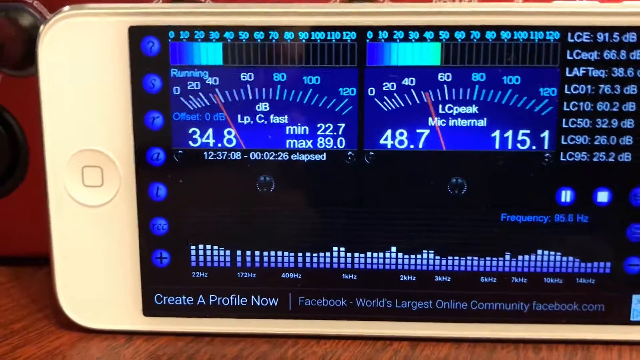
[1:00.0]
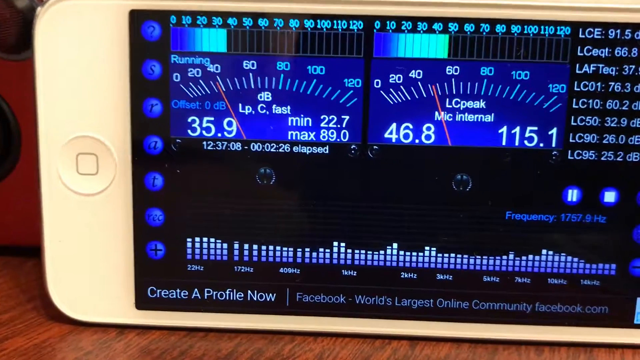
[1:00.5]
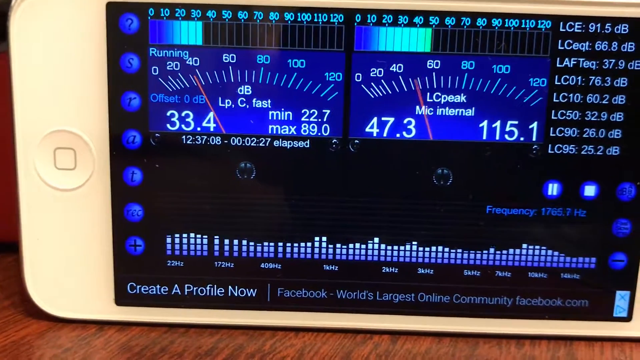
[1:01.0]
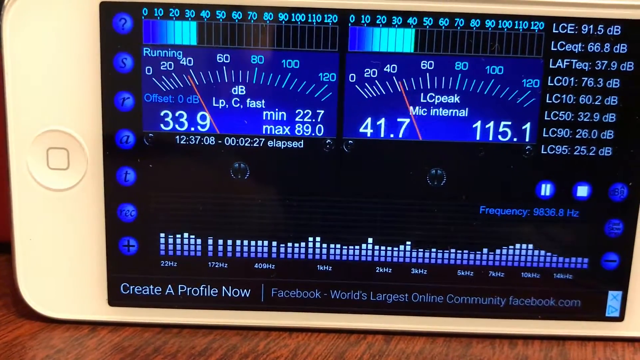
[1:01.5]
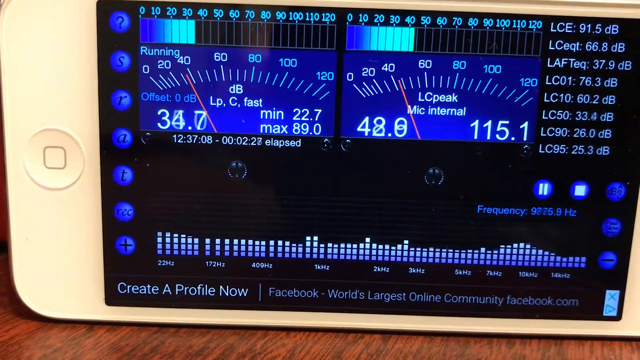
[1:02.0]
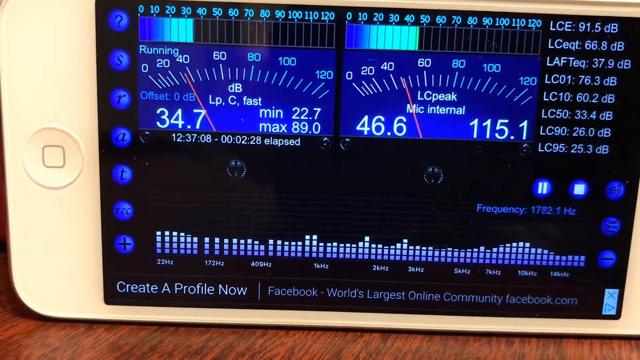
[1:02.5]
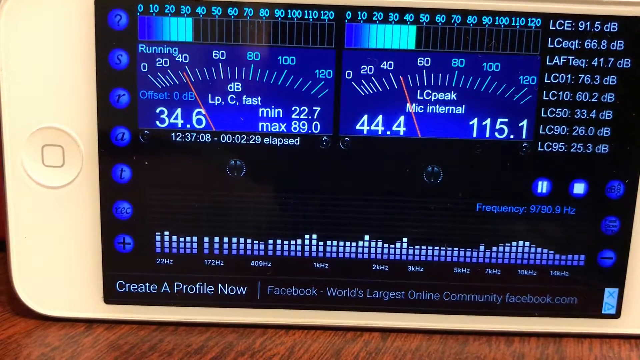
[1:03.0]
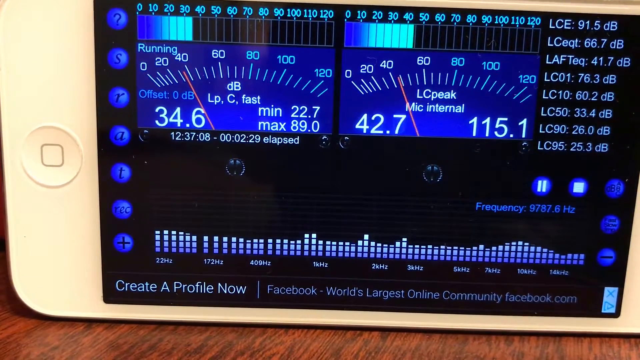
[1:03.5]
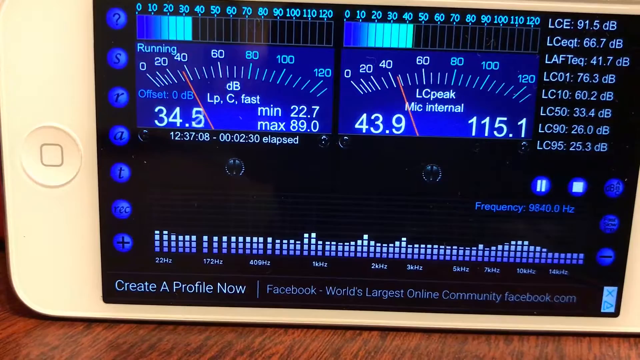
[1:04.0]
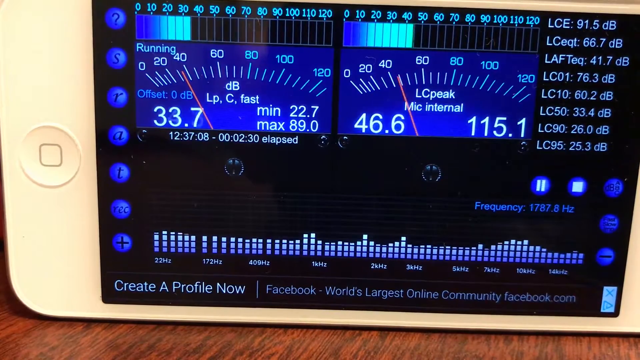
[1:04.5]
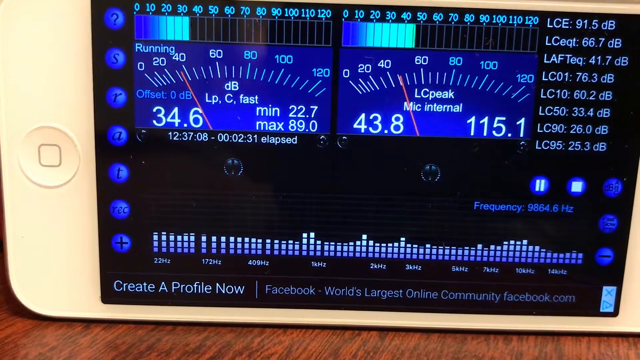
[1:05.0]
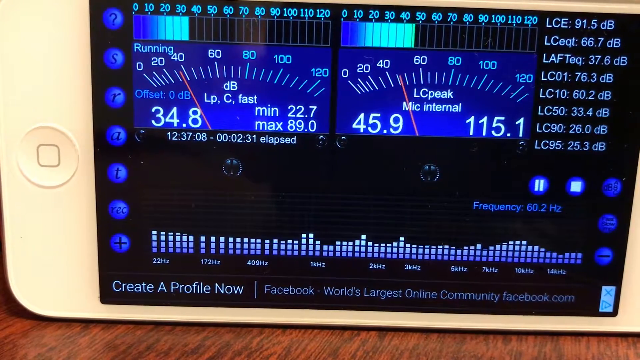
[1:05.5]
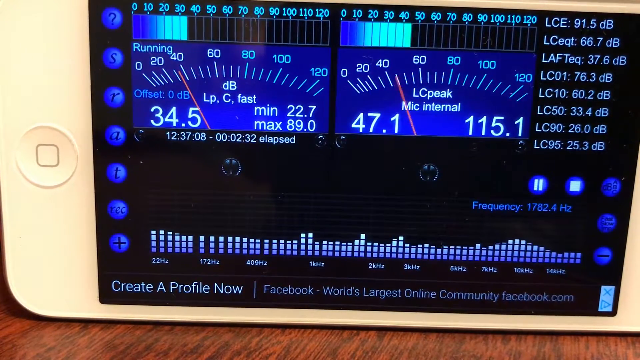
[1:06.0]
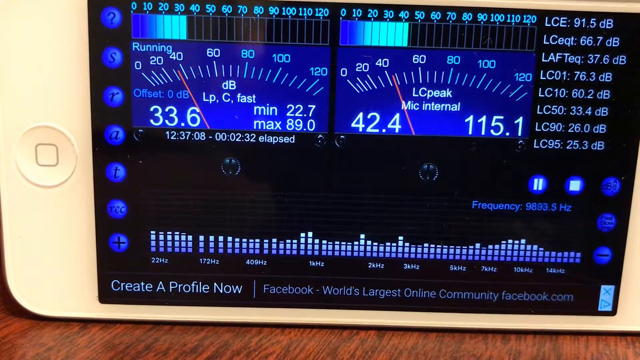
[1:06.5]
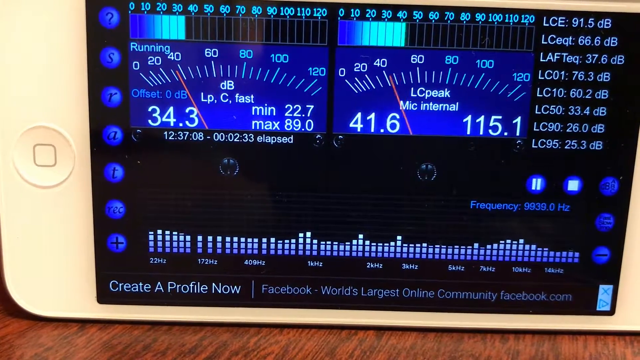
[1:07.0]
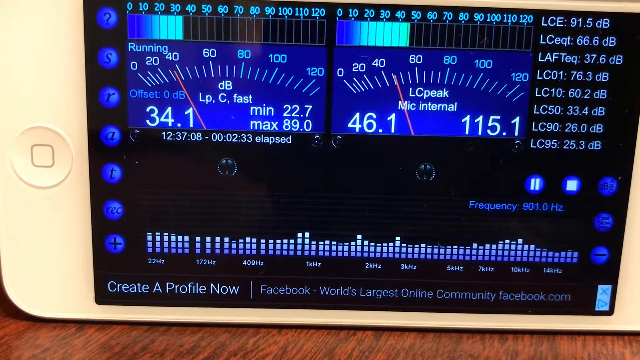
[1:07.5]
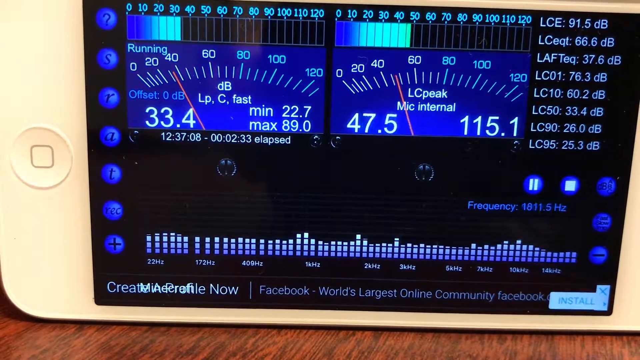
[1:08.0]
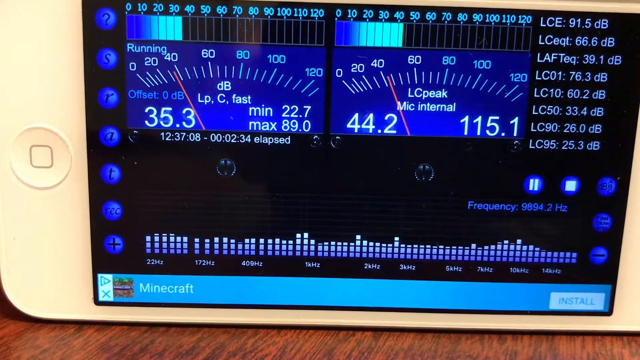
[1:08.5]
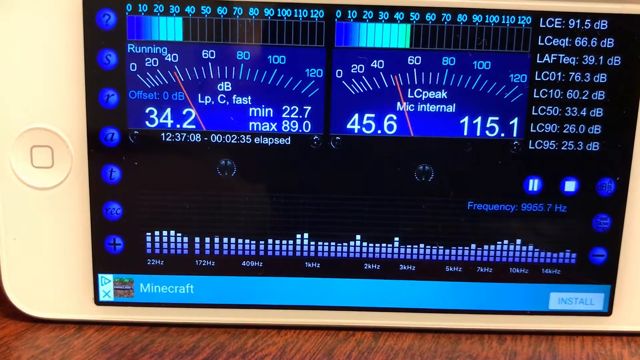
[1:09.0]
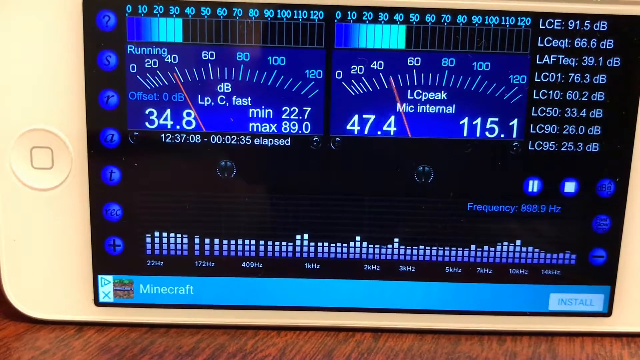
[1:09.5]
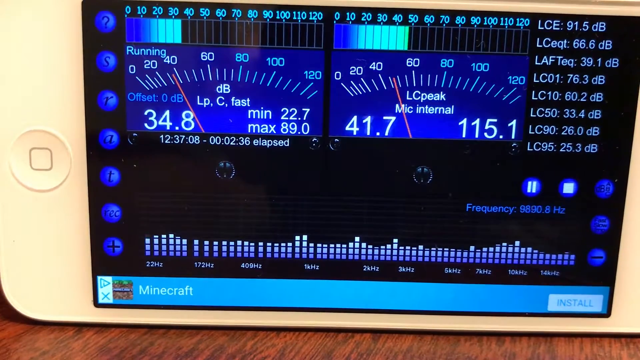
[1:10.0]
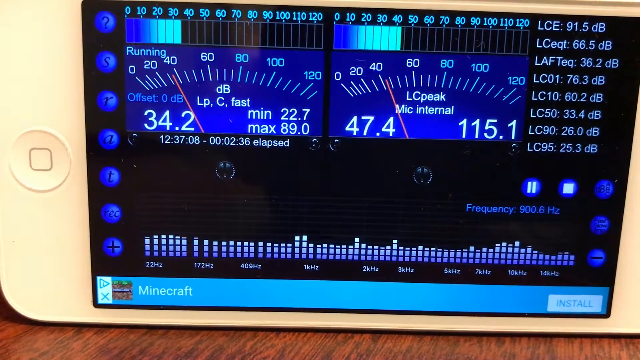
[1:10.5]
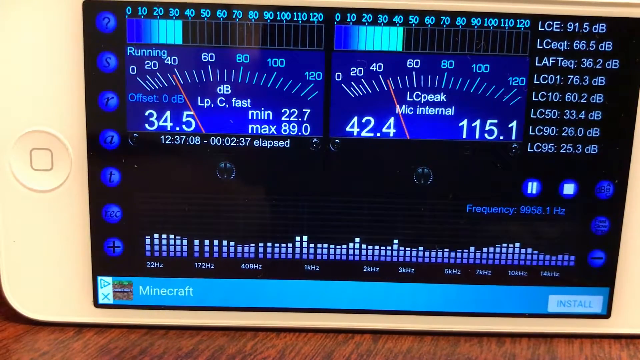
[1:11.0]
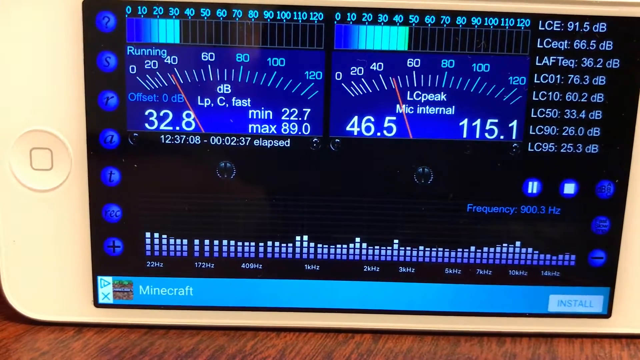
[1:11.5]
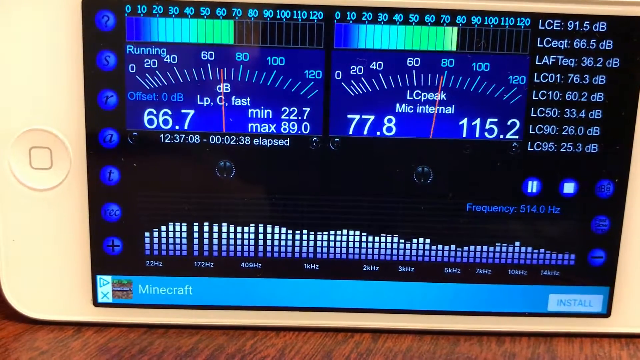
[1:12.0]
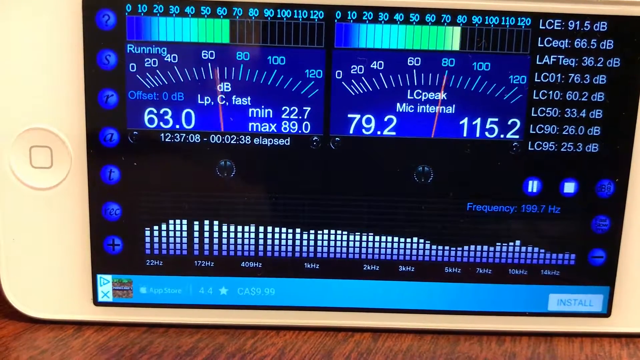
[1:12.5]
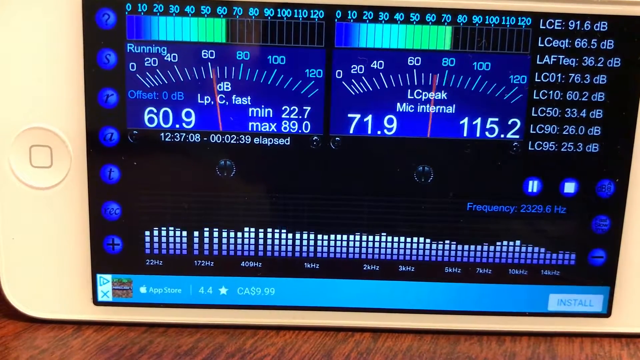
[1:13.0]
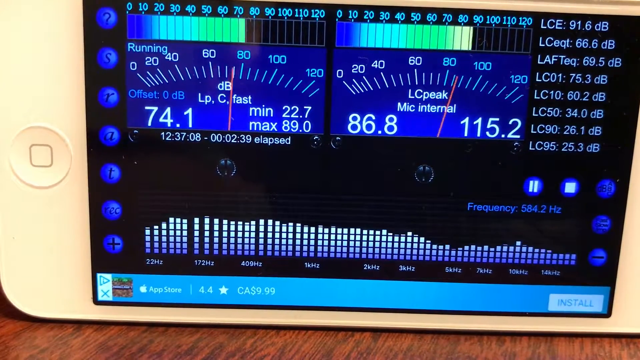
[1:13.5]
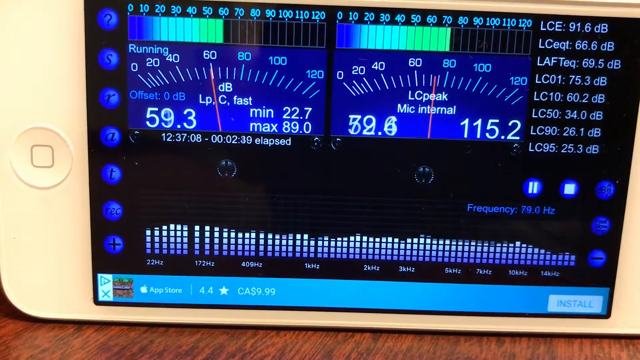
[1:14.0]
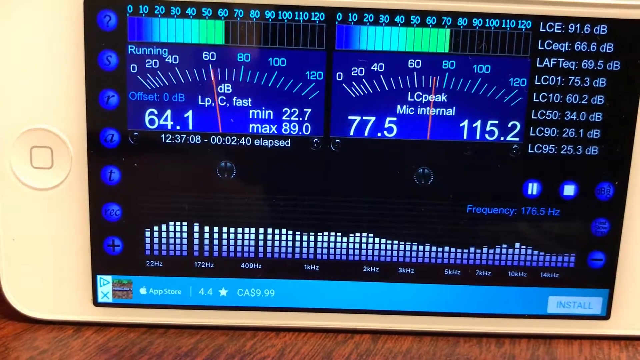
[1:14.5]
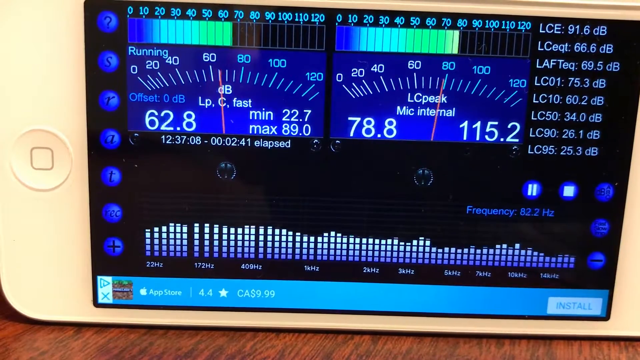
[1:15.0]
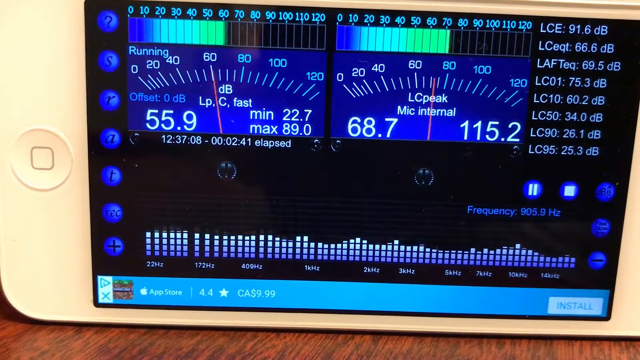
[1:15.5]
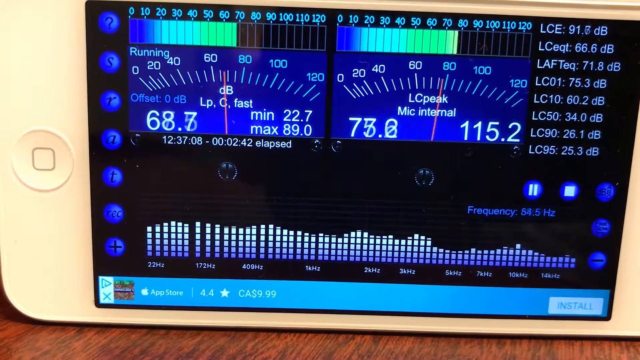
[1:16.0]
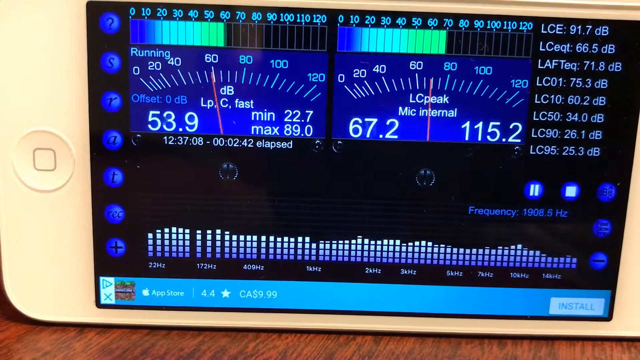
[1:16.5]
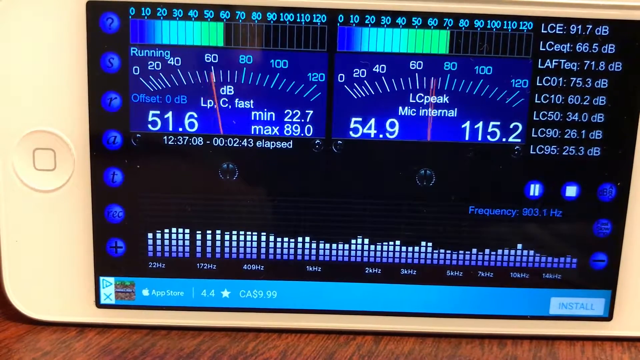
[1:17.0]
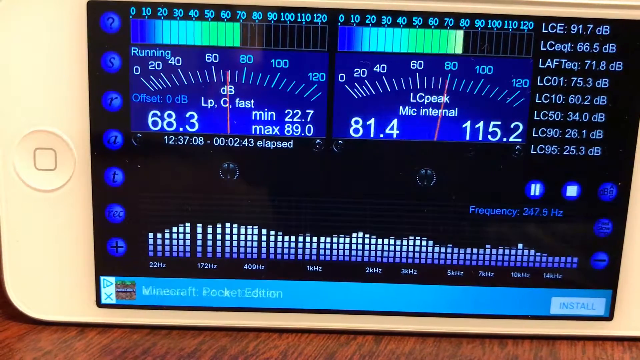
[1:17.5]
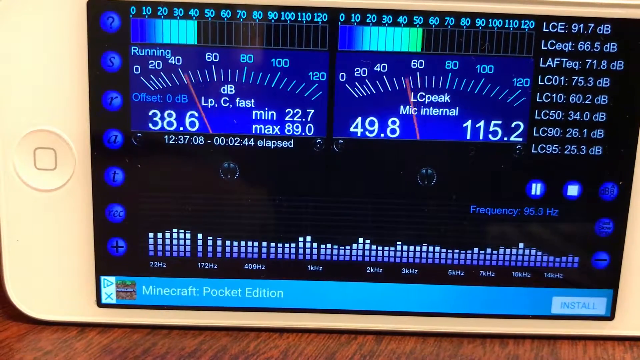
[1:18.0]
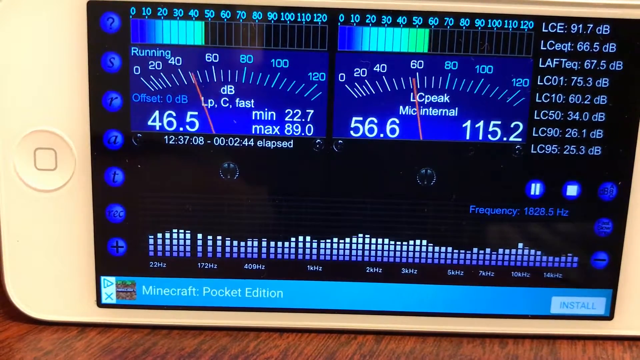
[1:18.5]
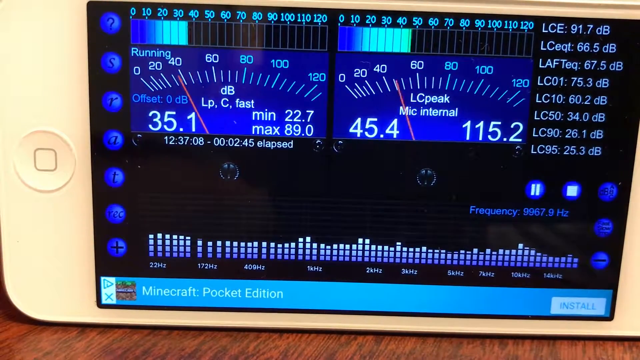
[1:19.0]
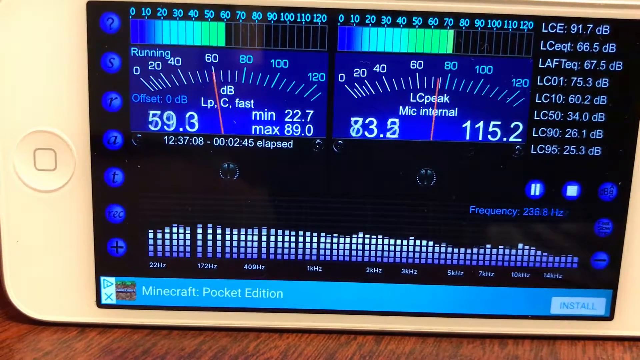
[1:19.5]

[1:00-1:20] The camera is zoomed in on a white, older-model iPhone, apparently an iPhone 12. An app is running that measures decibels from a microphone, with the text "mic internal" shown. Two hands bob up and down between 60 and 80 on the meter, and two level bars across the top go up and down, detecting peaks. A banner across the bottom advertises Minecraft, with an option to install it, its price at the Apple Store, and that it is a pocket edition, so the app appears to be freeware. The app is black with dark blue monitors and dark blue bars that peak up and down, blue icons, and numbers on the right-hand side.